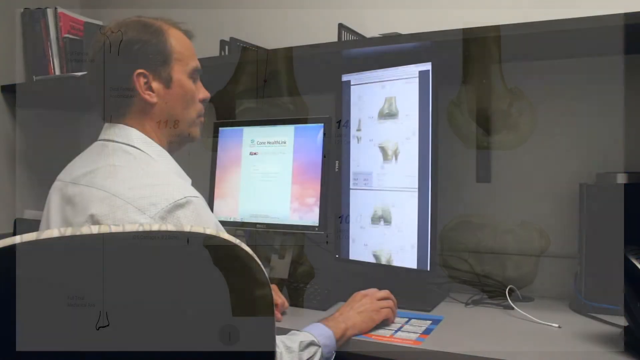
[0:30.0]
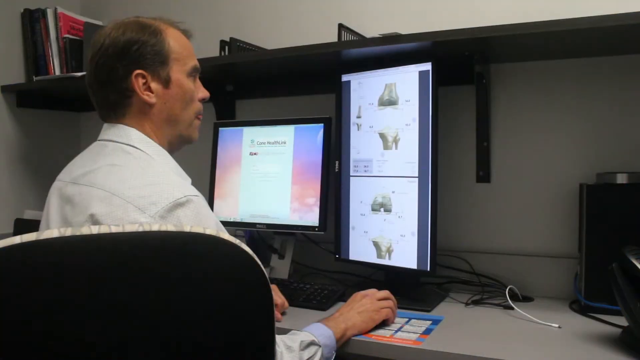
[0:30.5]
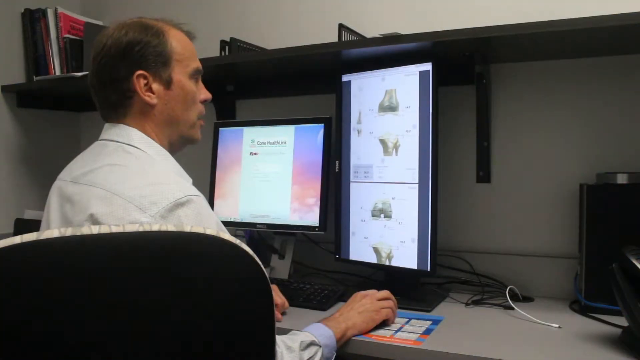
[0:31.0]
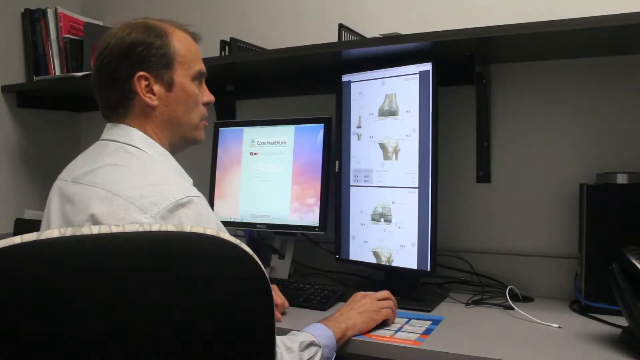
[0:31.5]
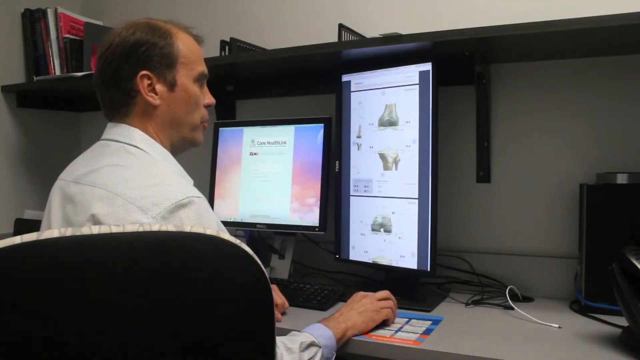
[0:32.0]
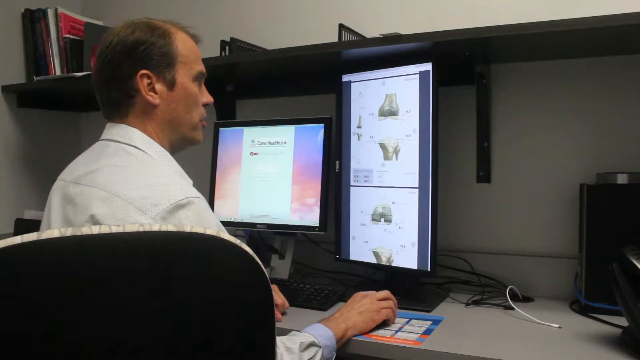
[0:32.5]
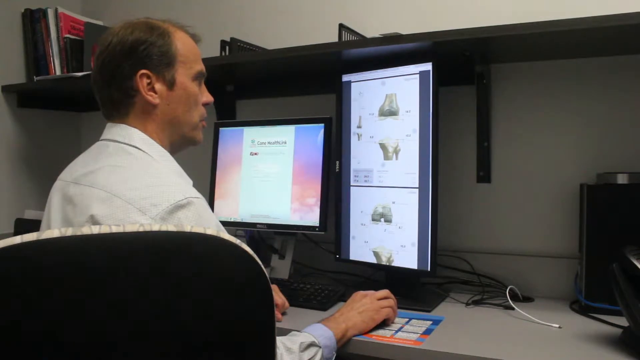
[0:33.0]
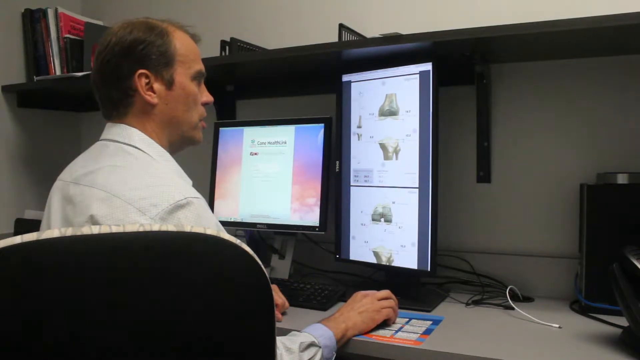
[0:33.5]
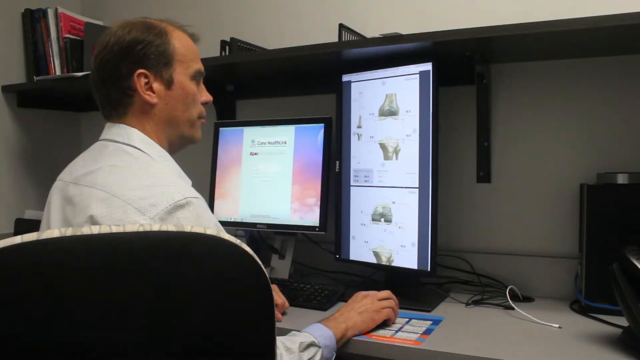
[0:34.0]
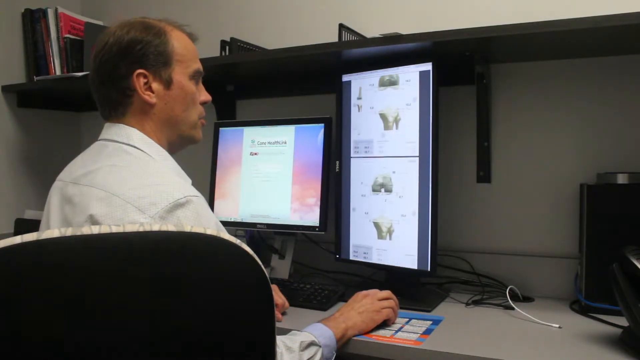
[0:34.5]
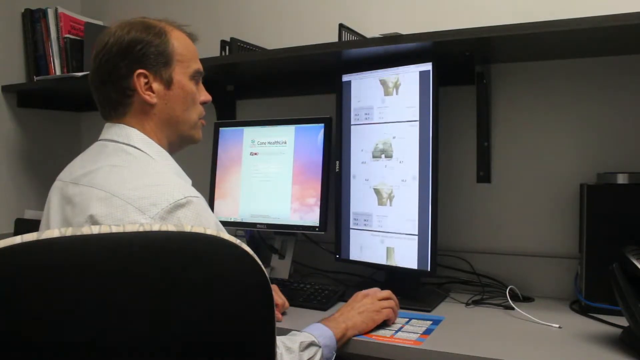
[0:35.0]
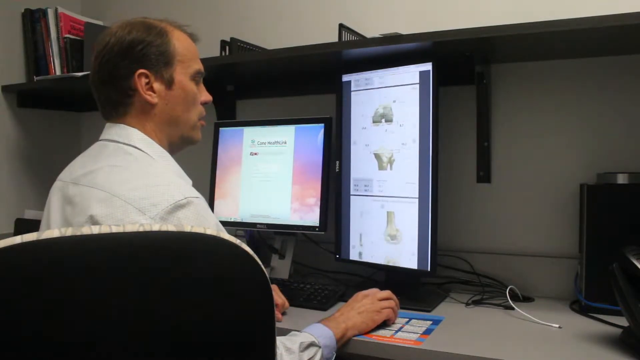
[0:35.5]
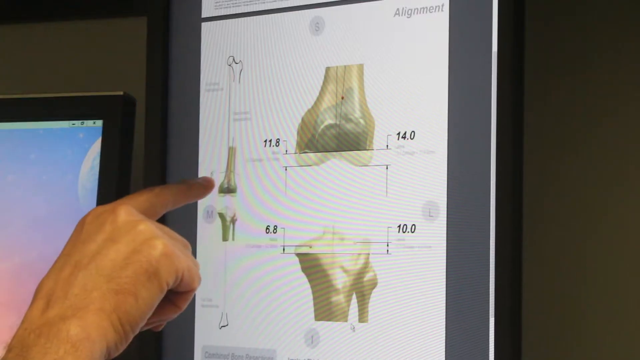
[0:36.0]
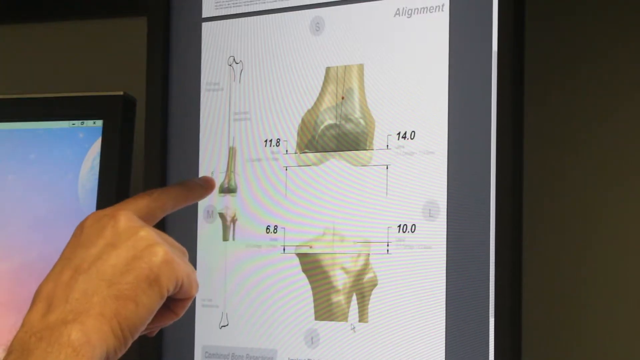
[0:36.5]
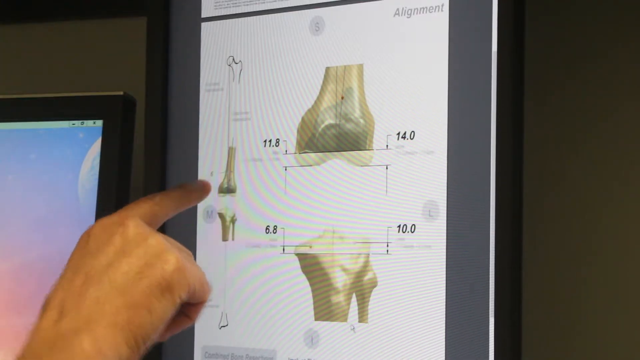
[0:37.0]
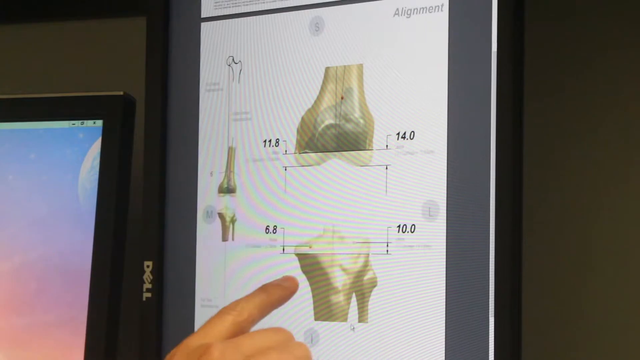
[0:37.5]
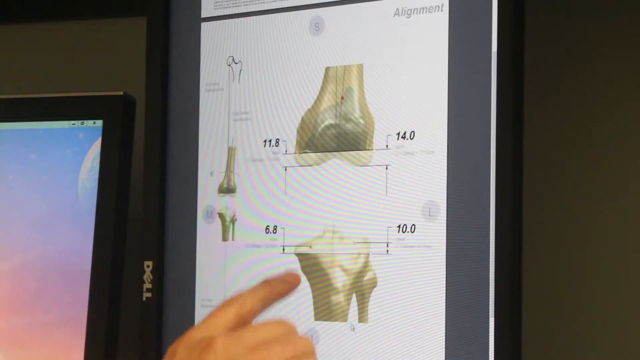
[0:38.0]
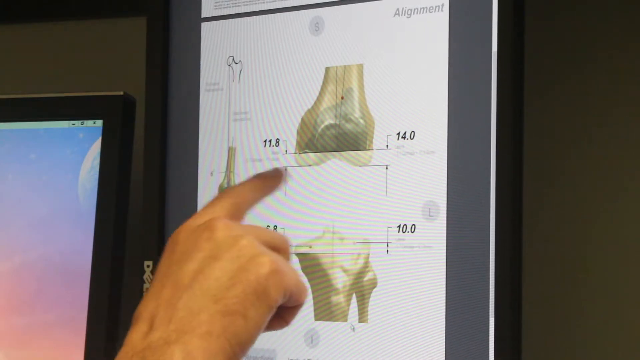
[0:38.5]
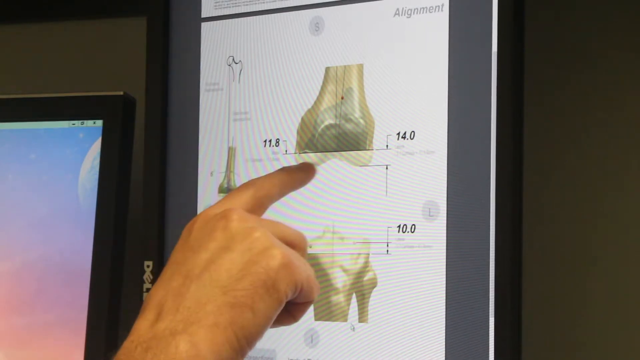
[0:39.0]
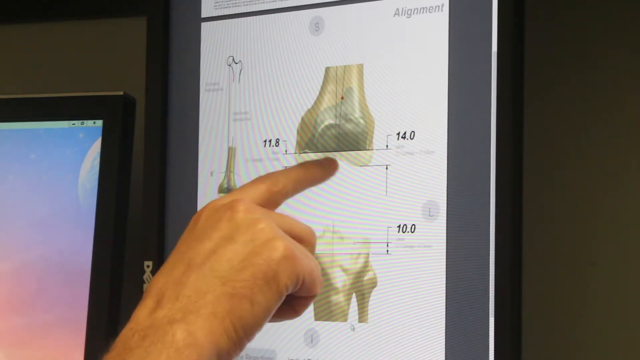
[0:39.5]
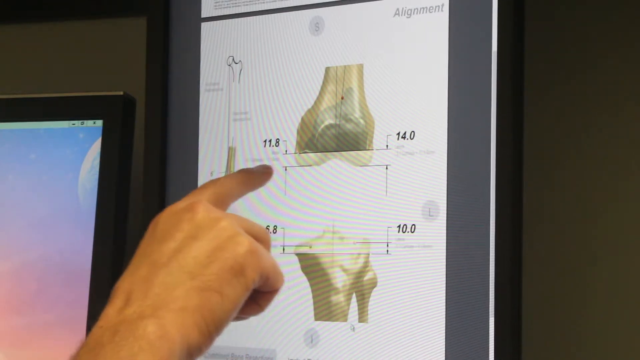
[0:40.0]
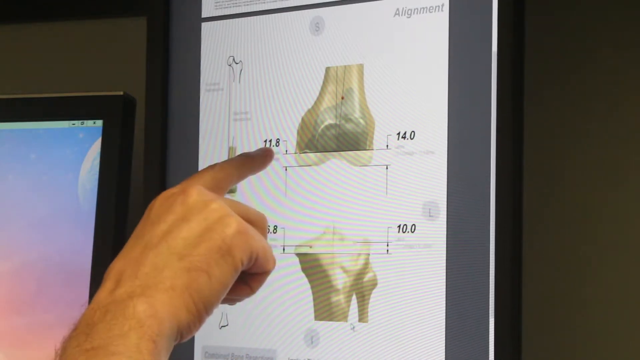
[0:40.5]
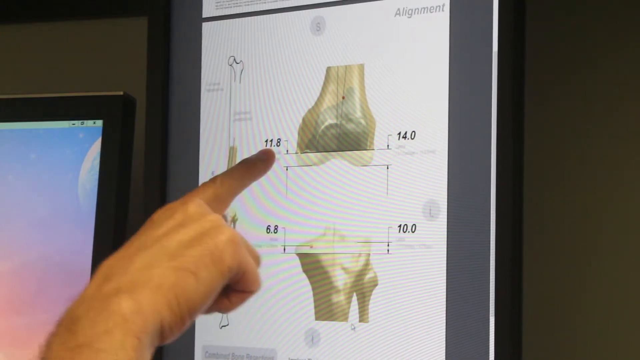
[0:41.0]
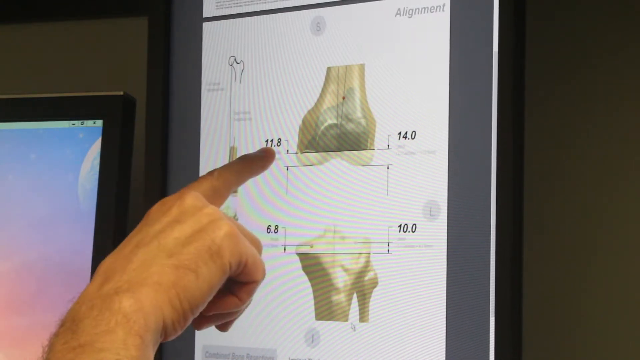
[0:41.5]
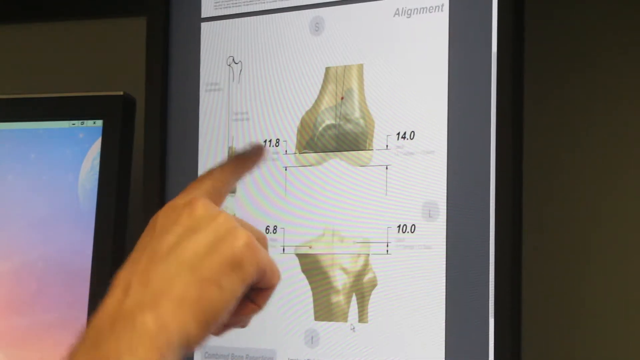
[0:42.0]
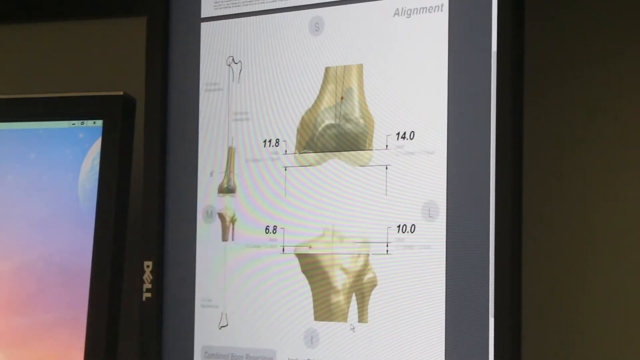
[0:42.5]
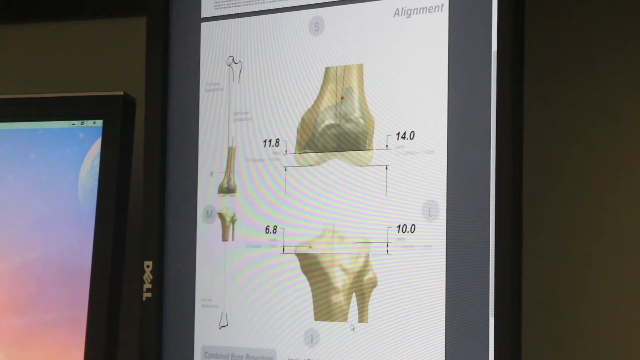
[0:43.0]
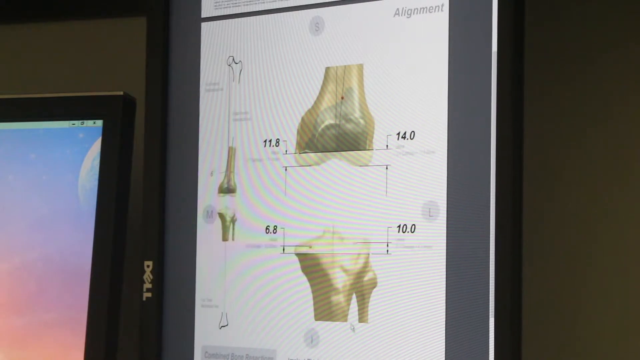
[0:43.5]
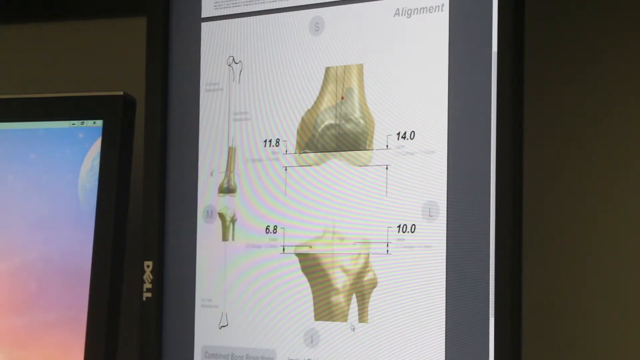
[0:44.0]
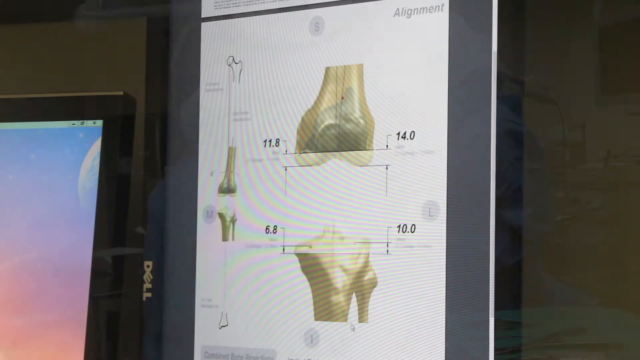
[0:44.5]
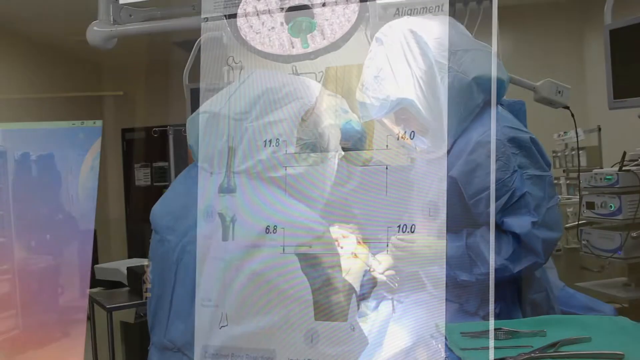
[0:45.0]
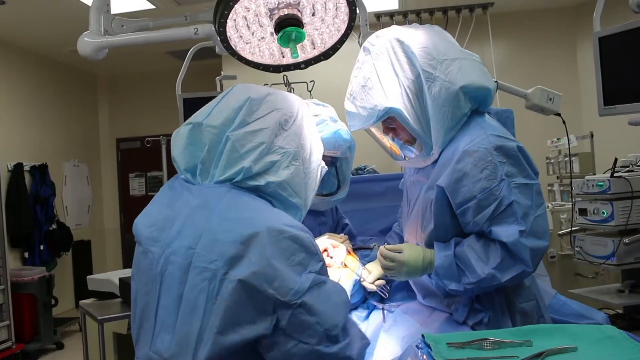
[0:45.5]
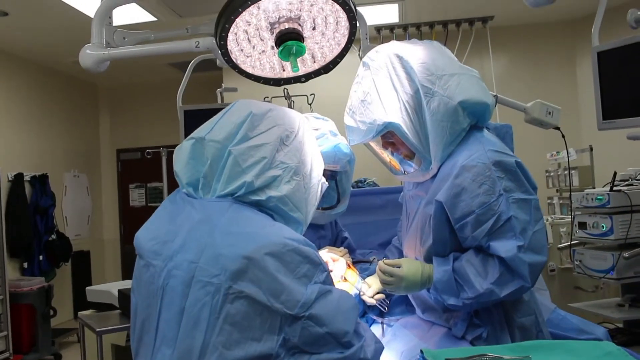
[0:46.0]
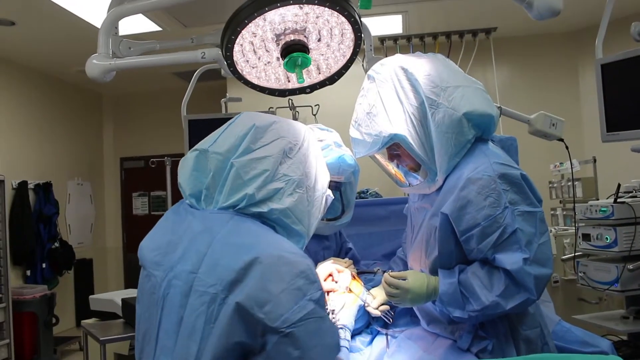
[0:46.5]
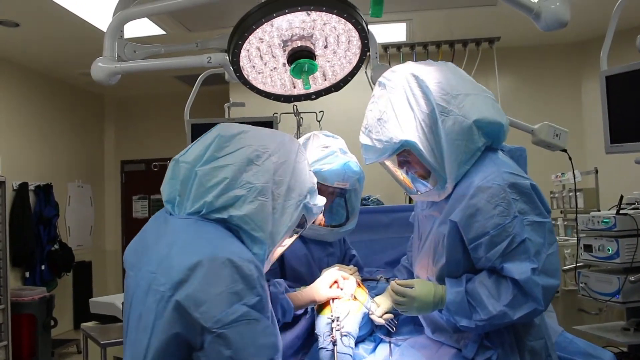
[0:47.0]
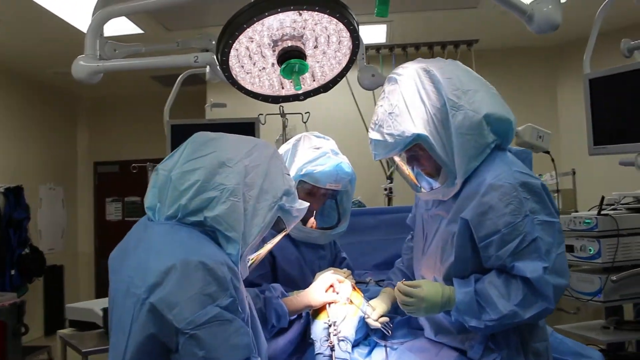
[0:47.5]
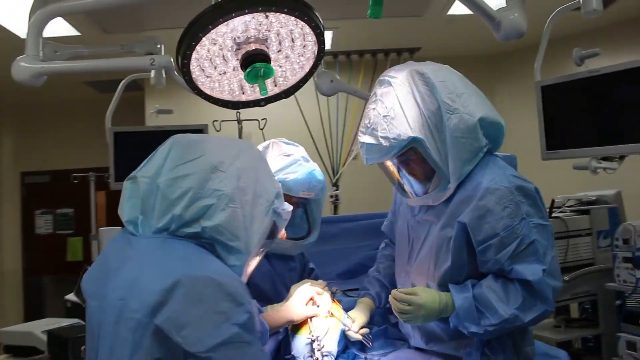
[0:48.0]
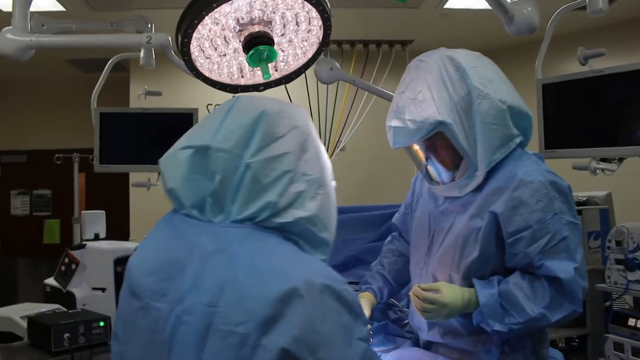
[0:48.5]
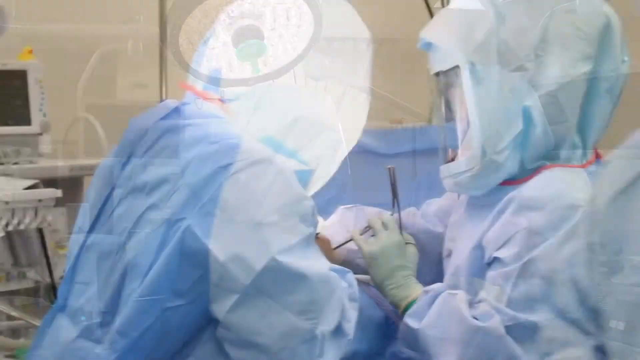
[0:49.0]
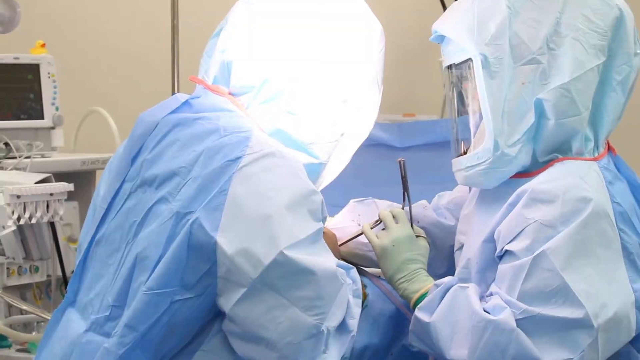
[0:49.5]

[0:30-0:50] The shot returns to the man on the left side looking at the two computer screens. His finger moves a little as he talks, clicking the mouse, which makes the screen on the right side scroll up. The camera zooms in on that screen, and his pointer finger comes in from the bottom left, the back of his hand toward the camera and the other fingers tucked into his palm. He points at the long leg bone on the left side of the screen, then moves down to what looks like a joint at the bottom right of the screen. His finger moves up and points underneath it, moving back and forth, then he points to 11.8 and moves his hand off the screen. The video cuts to an operating room where people are dressed in all blue, like scrubs, with gloves, big blue hats somewhat like hazmat hats, and shields on their faces. Above them is a big black-rimmed light with lights in it. They are operating on something that is hard to make out. A side shot follows, with one of them standing on the left and one standing on the right as they operate; the one on the right holds forceps.